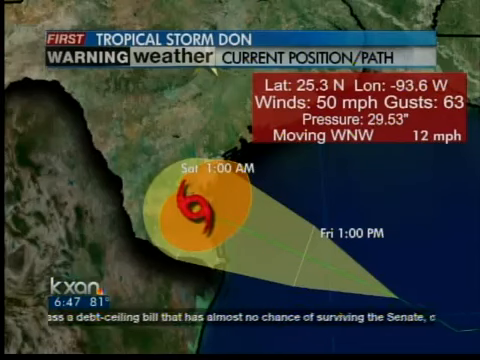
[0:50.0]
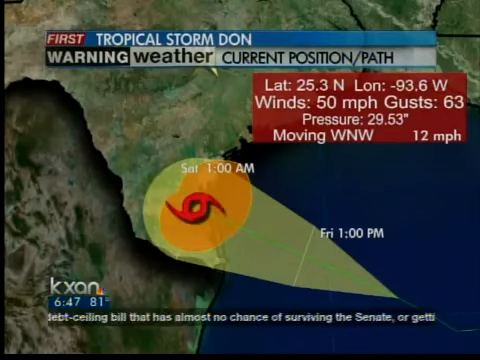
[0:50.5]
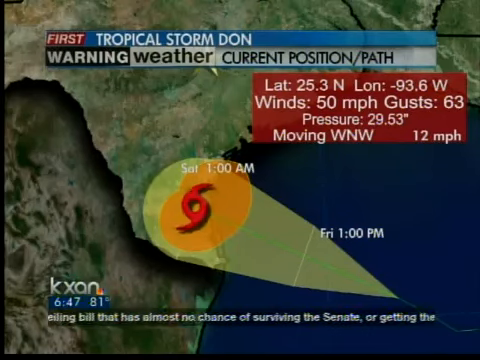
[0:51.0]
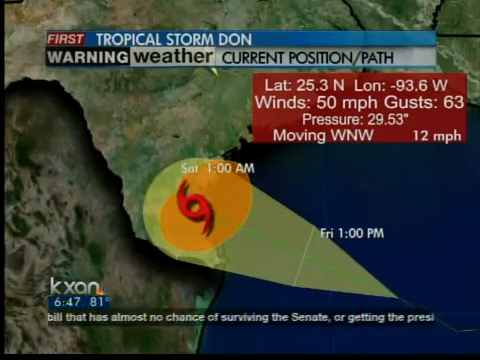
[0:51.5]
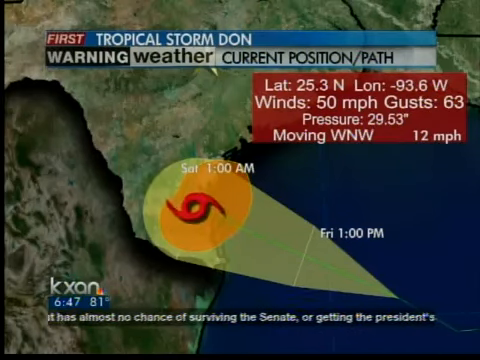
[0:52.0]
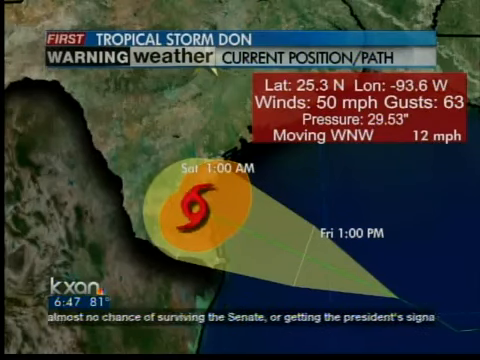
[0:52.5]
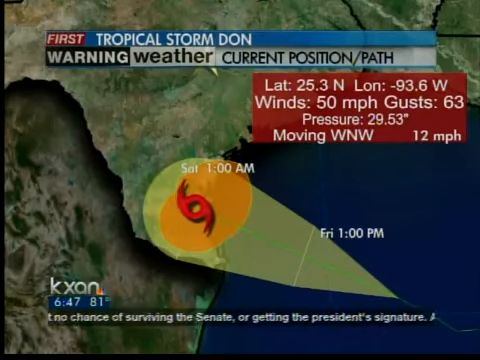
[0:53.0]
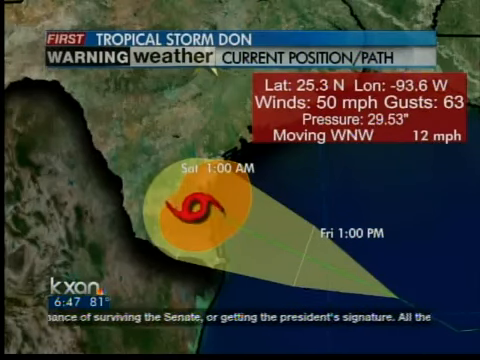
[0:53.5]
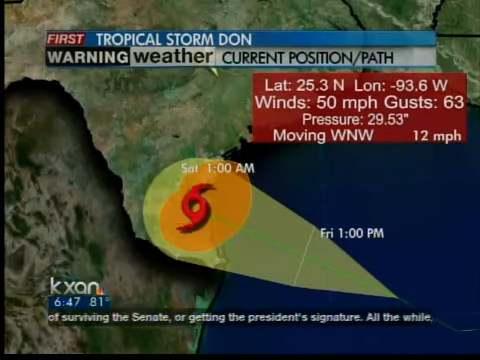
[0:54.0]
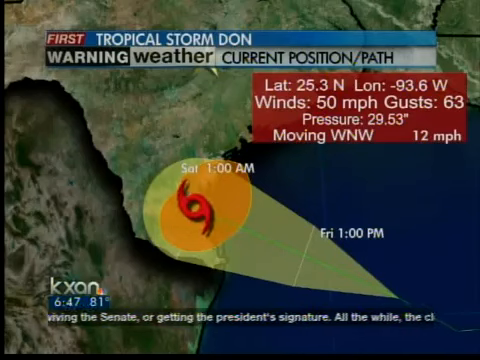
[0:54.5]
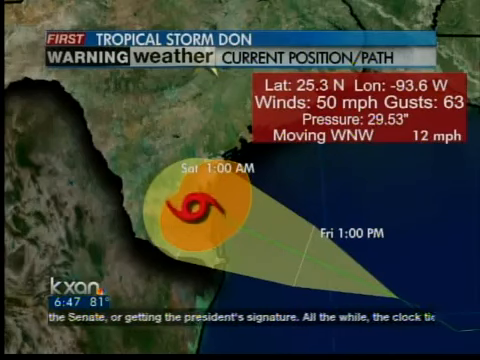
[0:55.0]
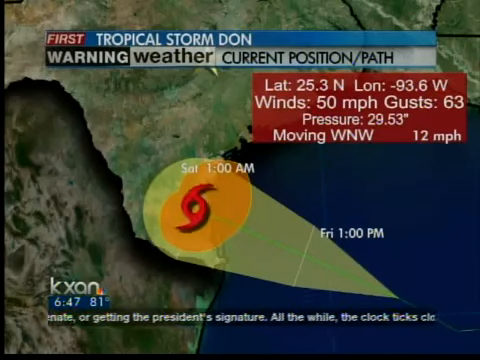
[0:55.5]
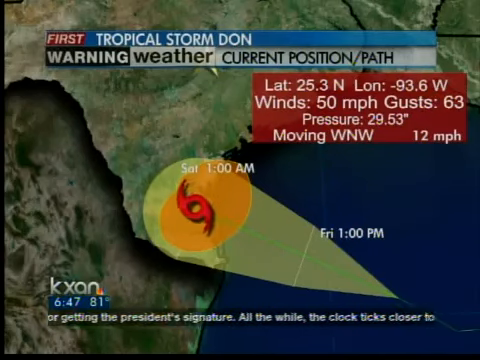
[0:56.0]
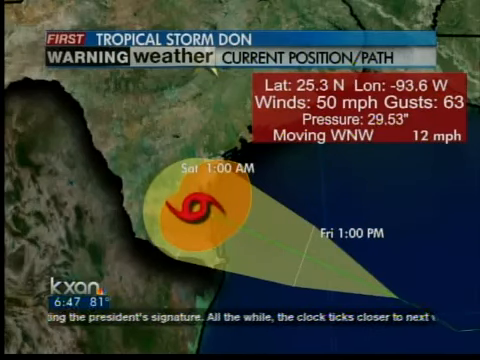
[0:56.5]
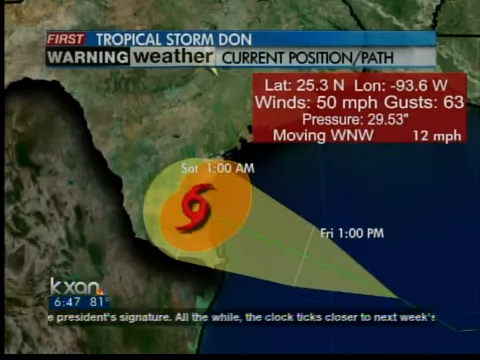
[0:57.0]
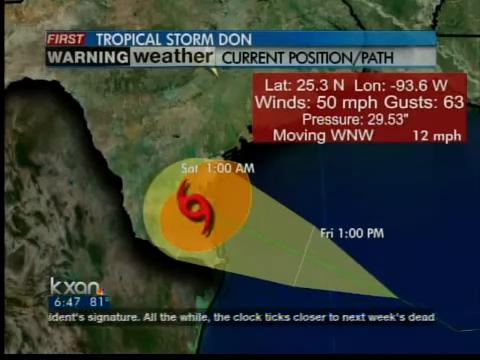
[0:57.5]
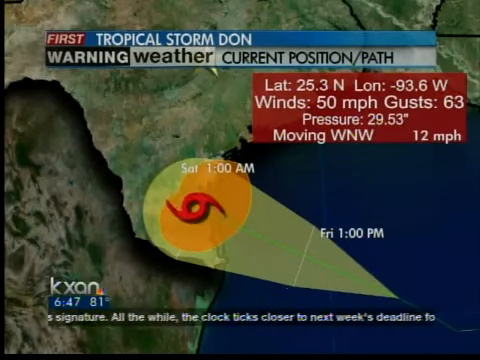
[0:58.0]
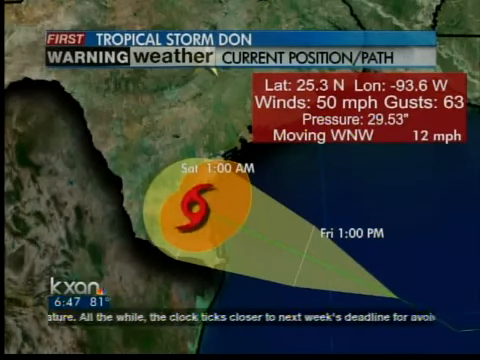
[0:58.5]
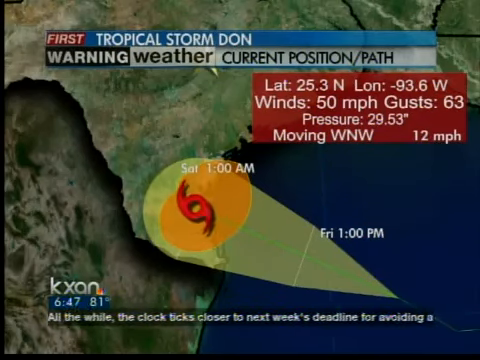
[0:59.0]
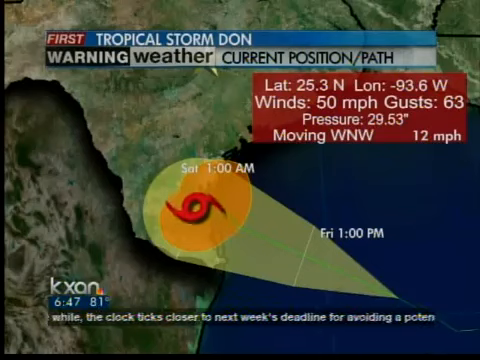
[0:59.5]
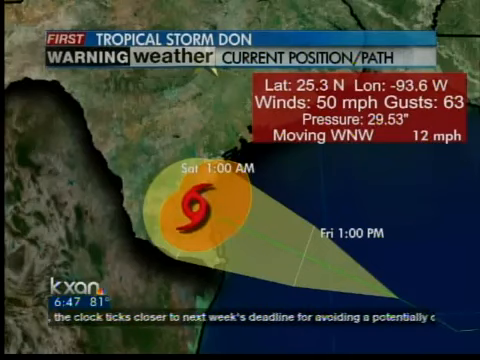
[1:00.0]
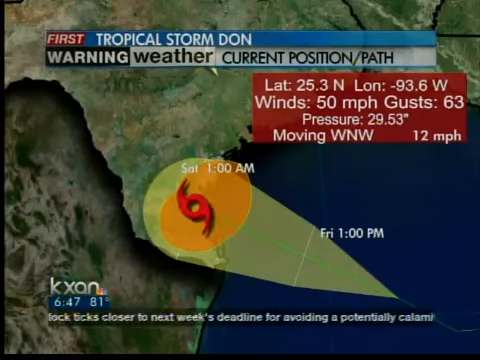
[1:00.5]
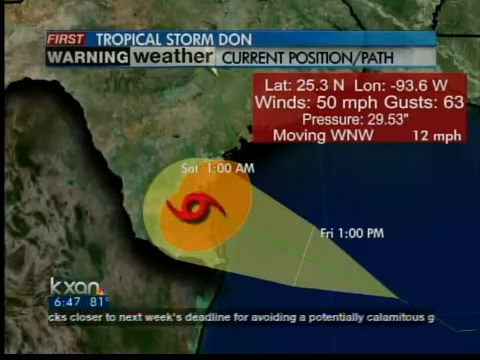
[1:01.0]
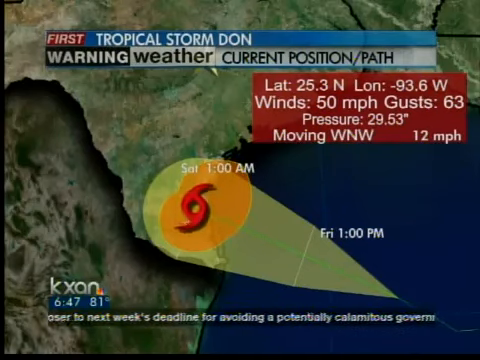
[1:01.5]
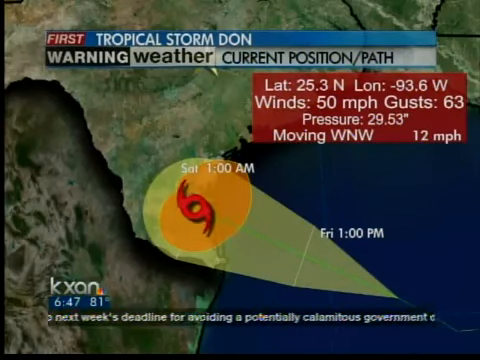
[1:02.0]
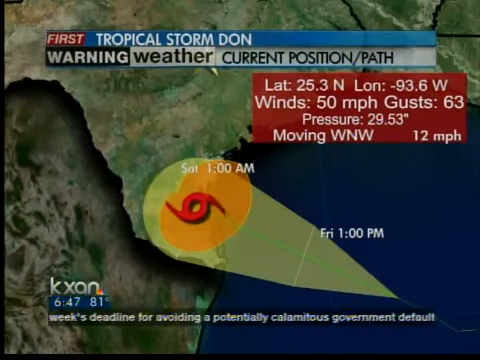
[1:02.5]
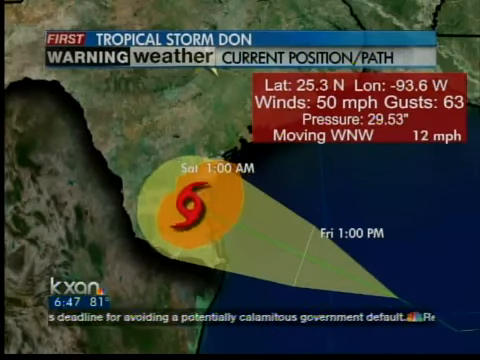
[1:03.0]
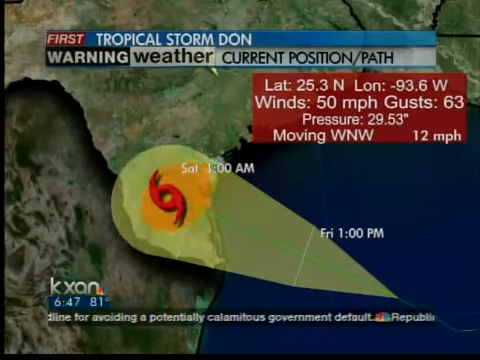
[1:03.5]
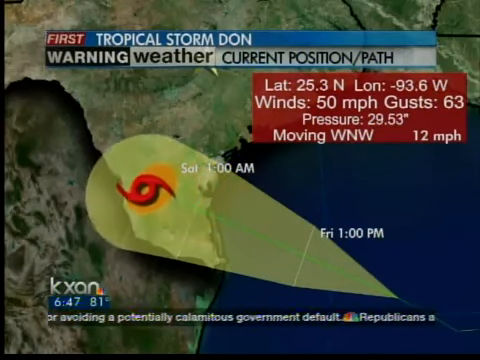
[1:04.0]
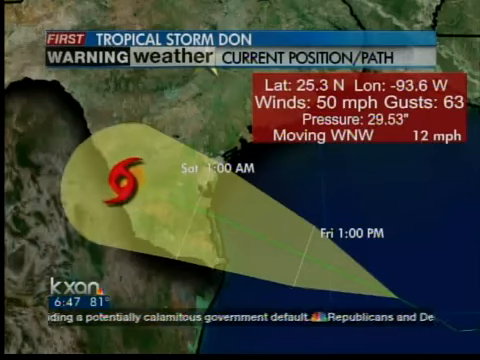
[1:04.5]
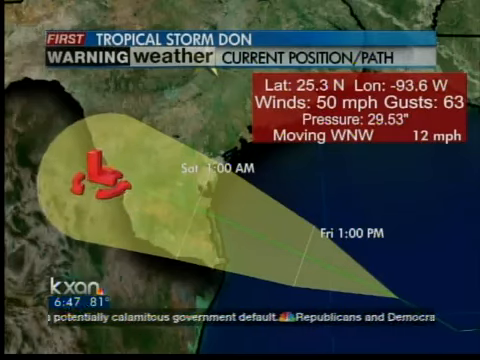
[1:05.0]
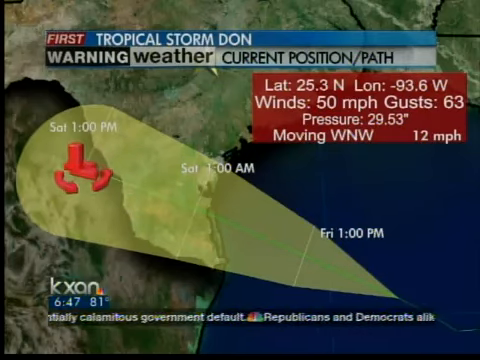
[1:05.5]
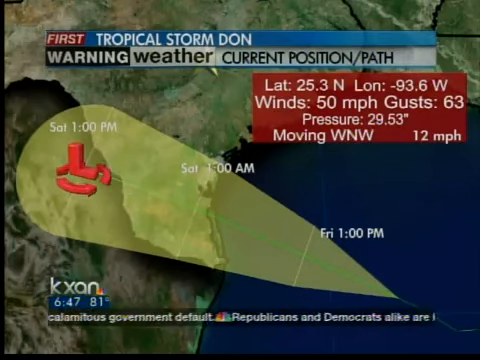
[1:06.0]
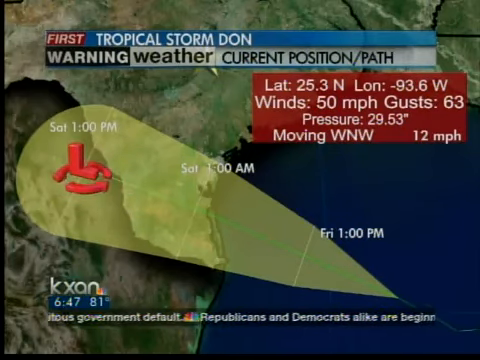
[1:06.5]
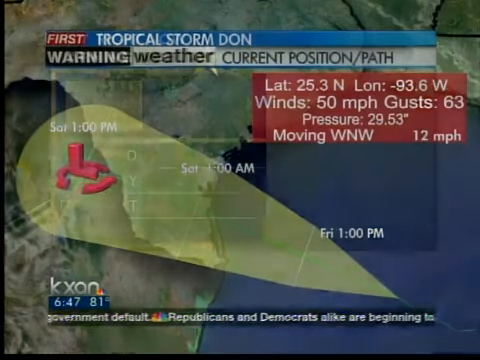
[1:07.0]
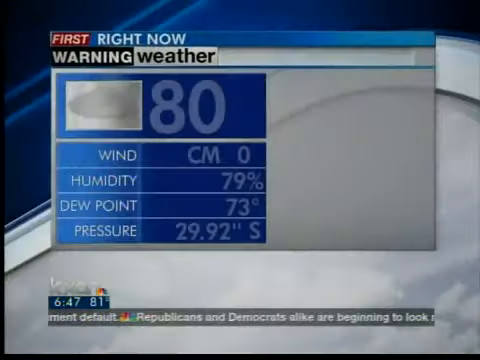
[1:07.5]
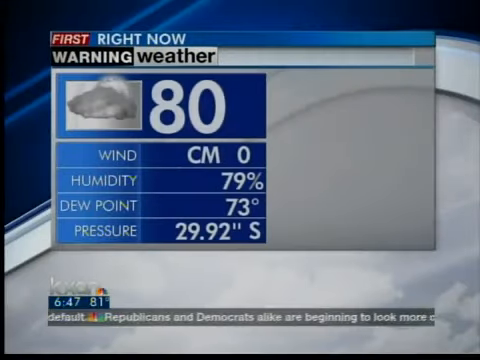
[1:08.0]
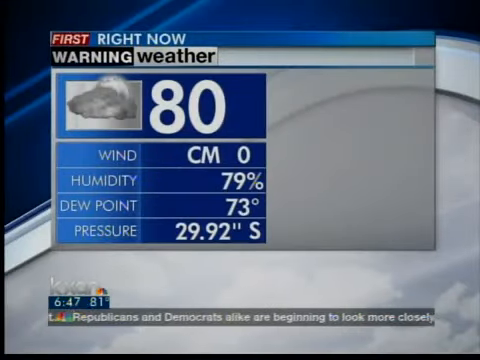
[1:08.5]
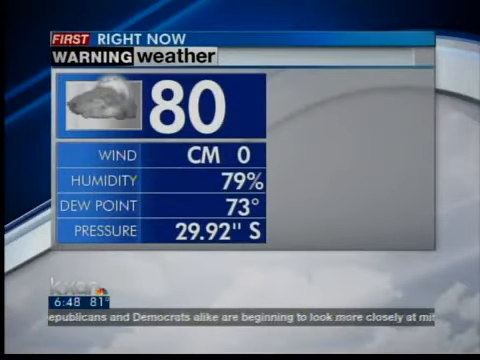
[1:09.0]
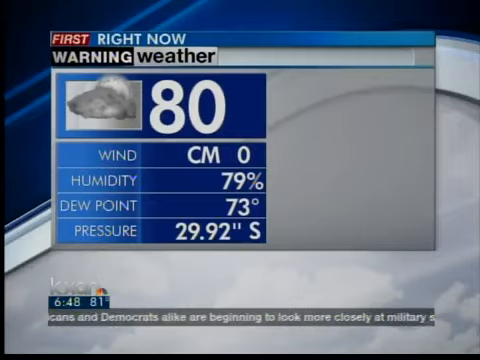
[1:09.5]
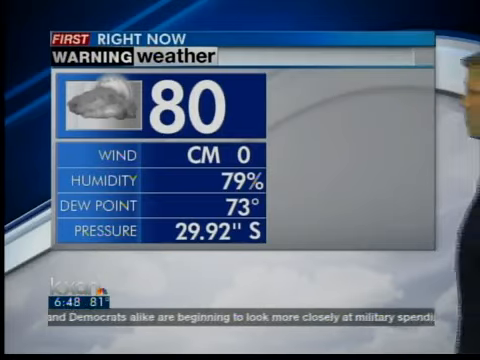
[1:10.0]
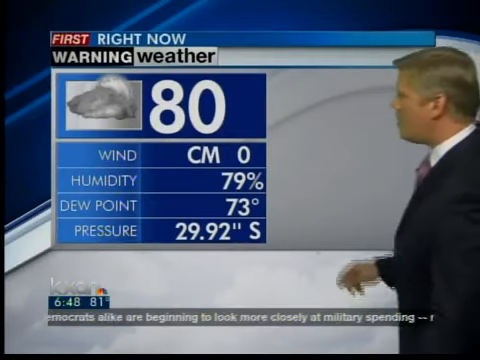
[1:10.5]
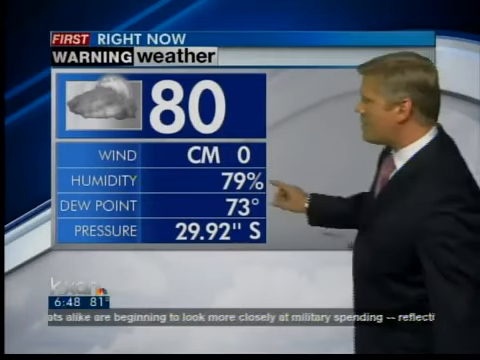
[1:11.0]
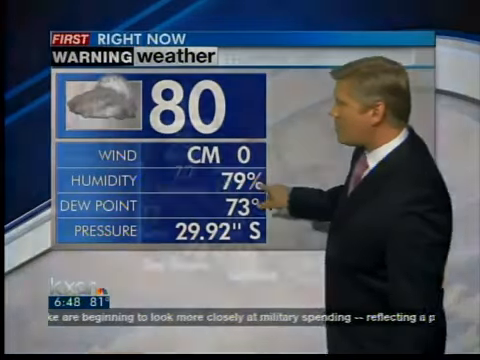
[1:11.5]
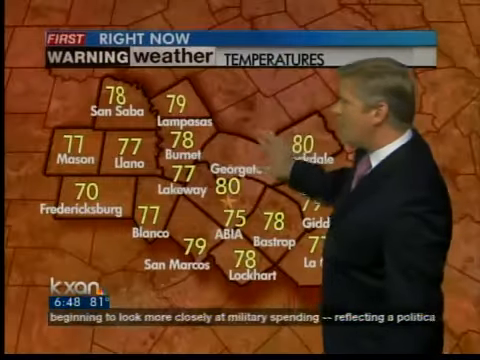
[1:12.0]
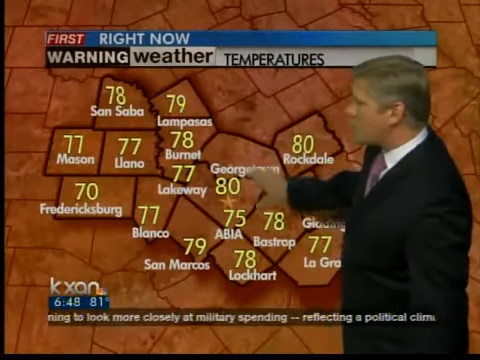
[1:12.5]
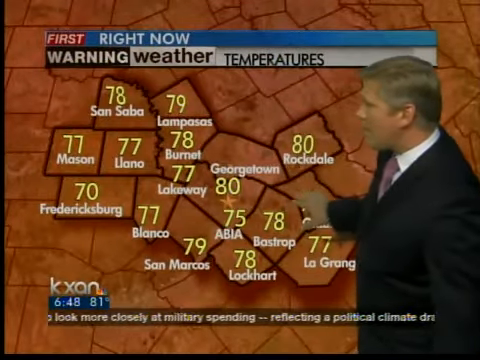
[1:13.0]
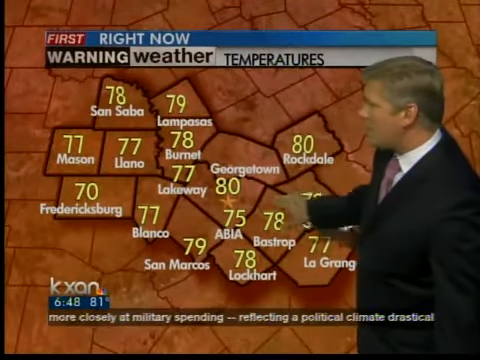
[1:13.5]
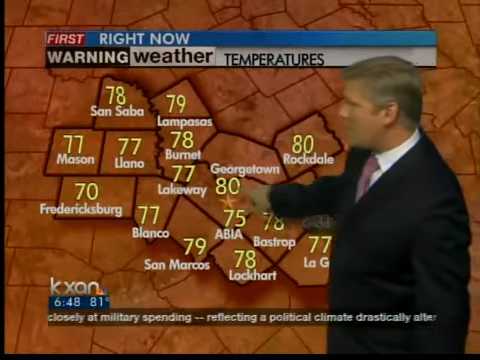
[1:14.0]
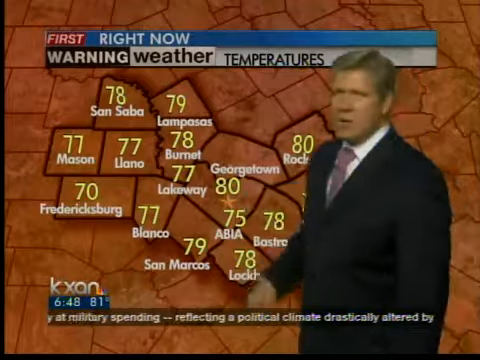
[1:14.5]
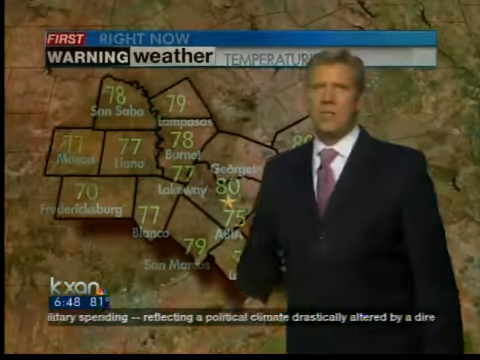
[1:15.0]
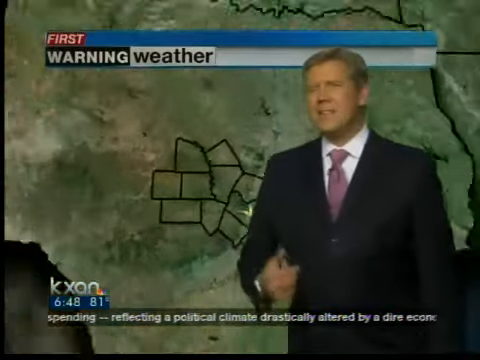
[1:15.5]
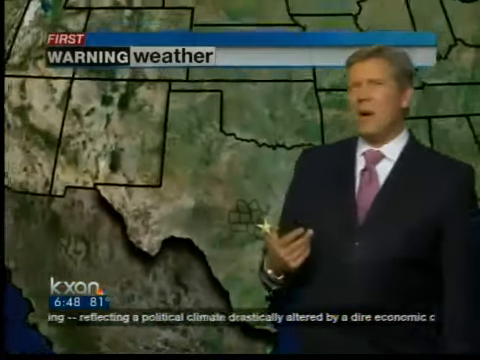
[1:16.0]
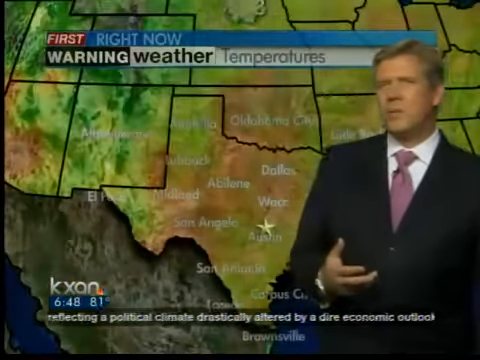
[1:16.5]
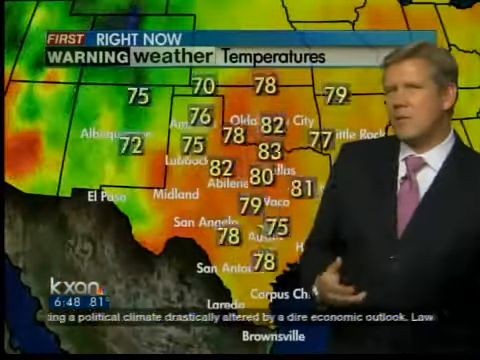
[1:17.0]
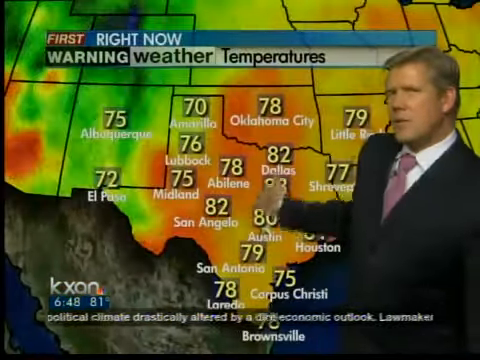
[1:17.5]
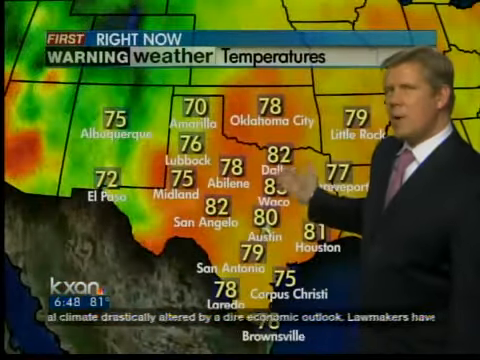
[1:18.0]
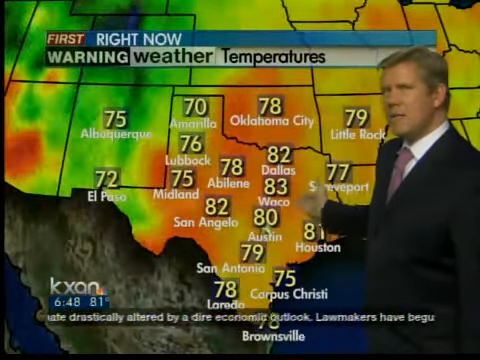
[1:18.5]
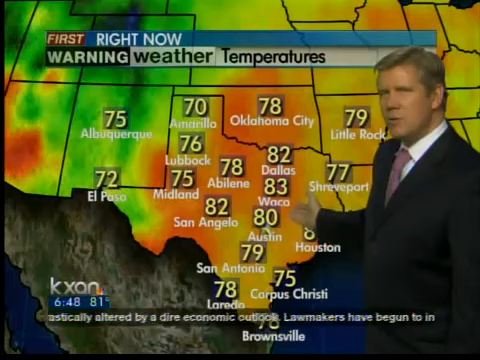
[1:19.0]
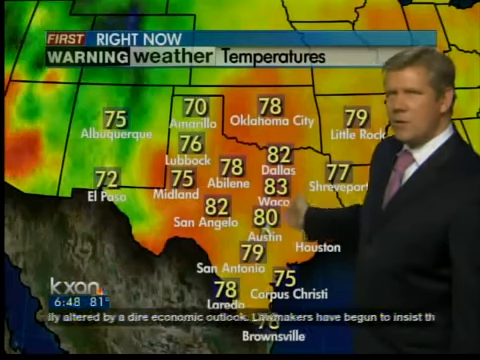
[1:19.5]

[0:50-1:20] The shape and the spinning hurricane symbol remain on the bottom tip of Texas while the news scroller continues with the debt ceiling deadline. The orange part underneath starts shrinking until it disappears as the hurricane icon is projected further to the upper left. The icon turns into a three-dimensional red L of about the same shape and size, standing straight up. Around its base is a pattern of three curved arrows circling the L counterclockwise. It stops to the left of the bottom of Texas, and "Sat 1:00 p.m." appears above it in white. Then a blue and white screen with a slight white wave pattern fades in. To the left is an info box that says "first right now warning weather." It has a blue rectangle with a gray rectangle on its left side containing a picture of a cloud, and the number 80 to the right of the gray rectangle. Below is another blue rectangle that appears to be a table. Its categories on the left are wind, humidity, dew point, and pressure, in white on a slightly lighter blue than the darker blue of the rest of the square. The humidity is 79%, the dew point is 73 degrees, and the pressure is 29.92" S. The weatherman comes back on screen from the right and points at the humidity. The view transitions to a map of some Texas counties in brown, with the temperature above each county in yellow. The weatherman turns to the viewer, and the county map zooms back out to the original map of the southern states and Texas. That becomes a temperature map that is mostly neon green, but orange and yellow around Texas, with the orange mostly centered on San Angela and Abilene. The weatherman gestures to it.